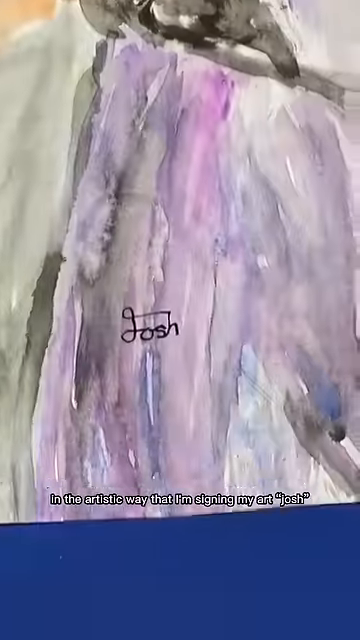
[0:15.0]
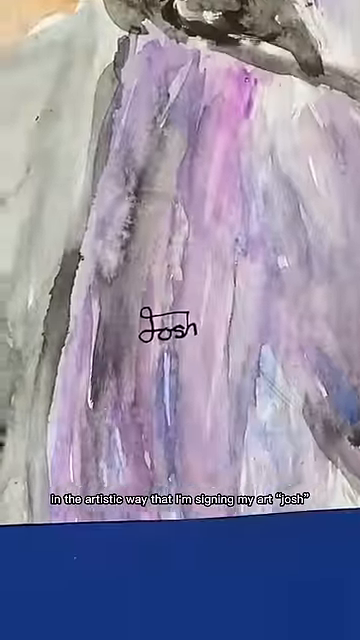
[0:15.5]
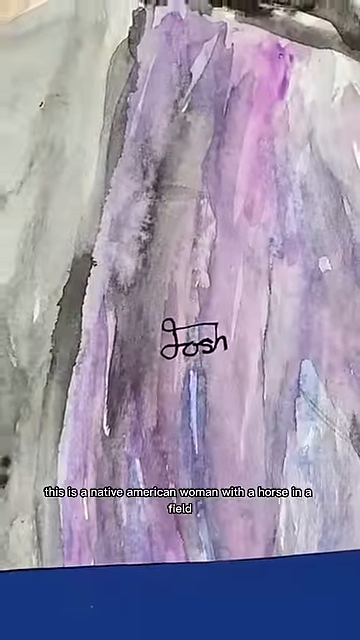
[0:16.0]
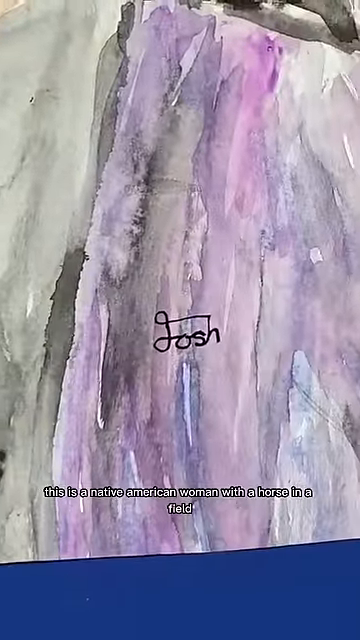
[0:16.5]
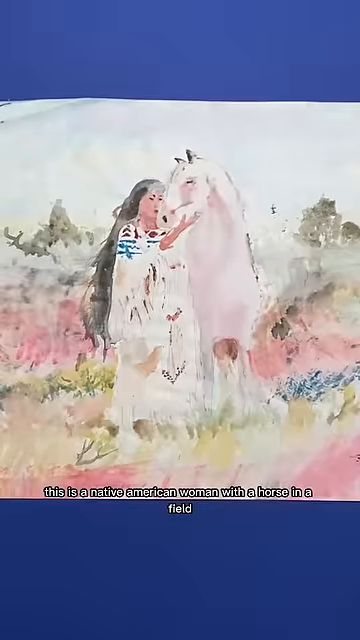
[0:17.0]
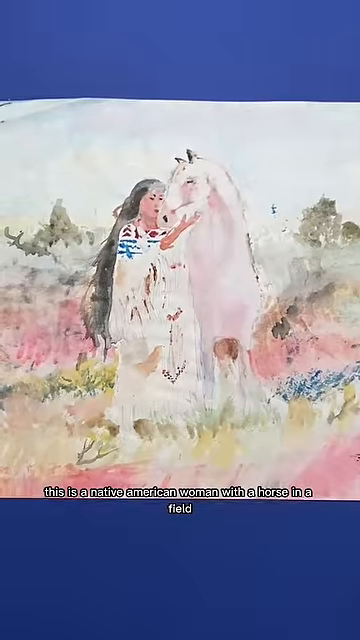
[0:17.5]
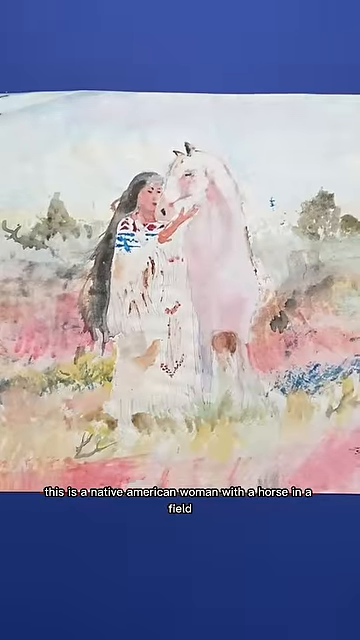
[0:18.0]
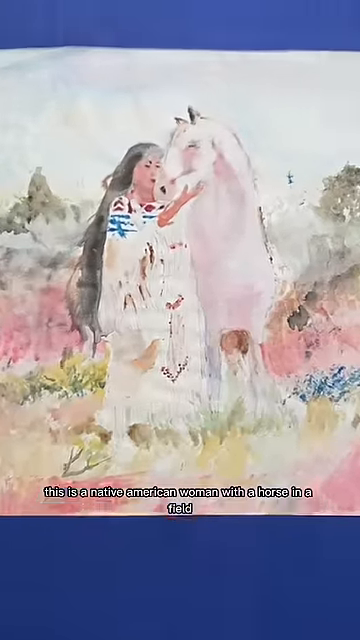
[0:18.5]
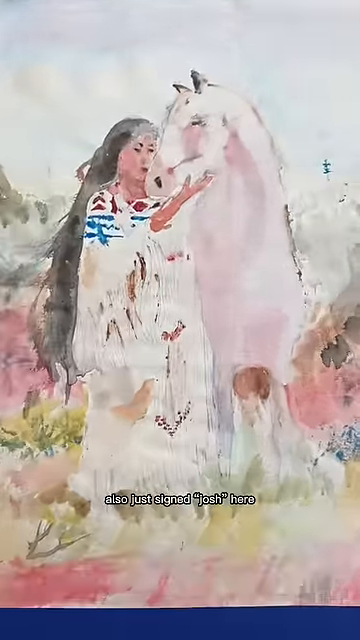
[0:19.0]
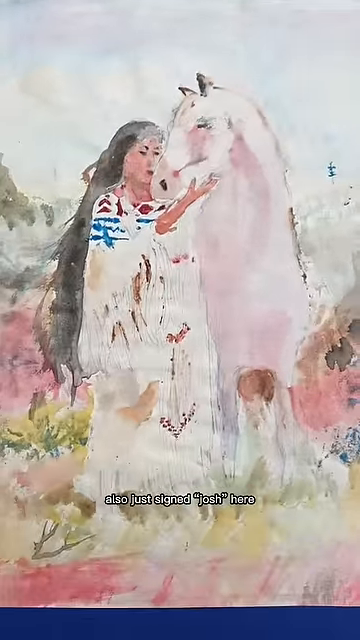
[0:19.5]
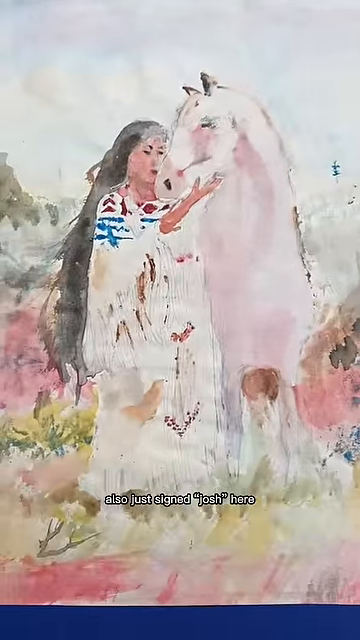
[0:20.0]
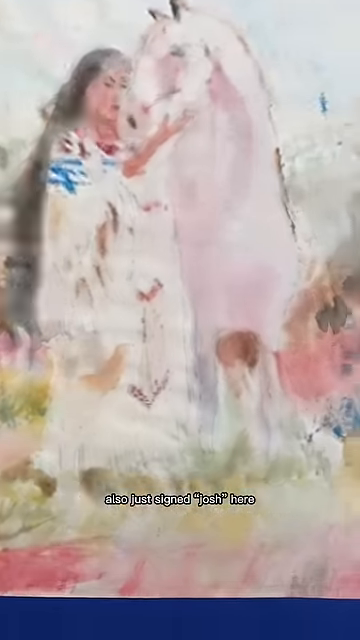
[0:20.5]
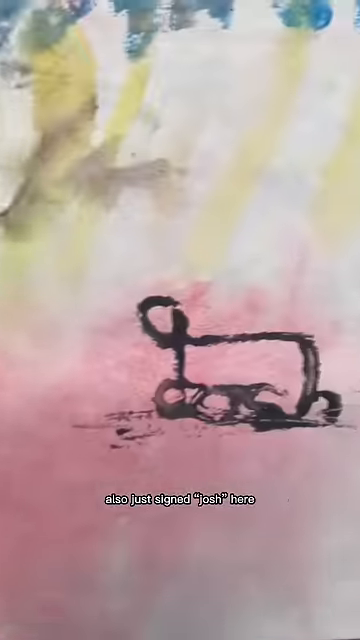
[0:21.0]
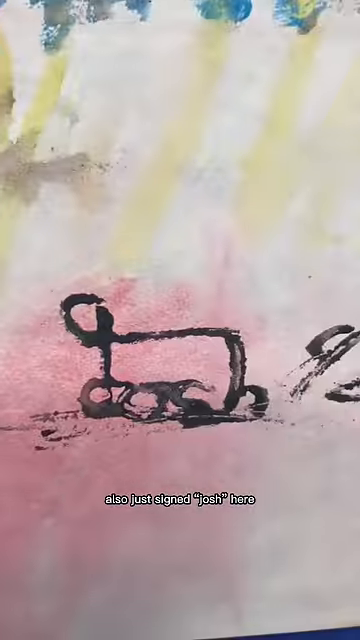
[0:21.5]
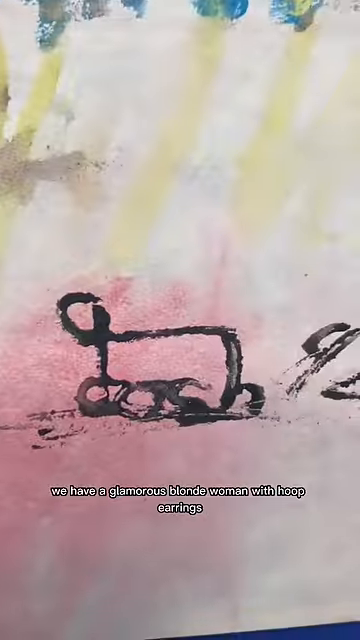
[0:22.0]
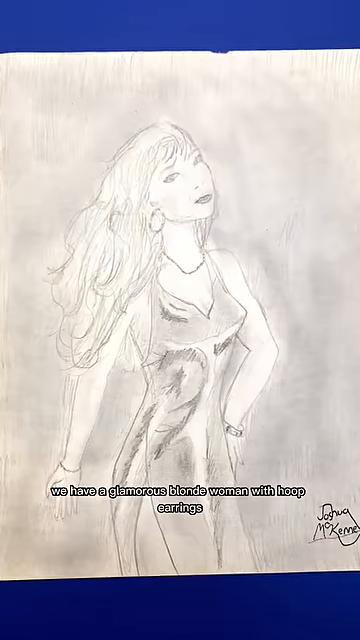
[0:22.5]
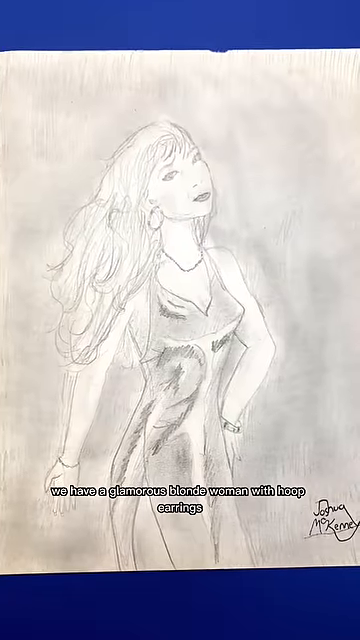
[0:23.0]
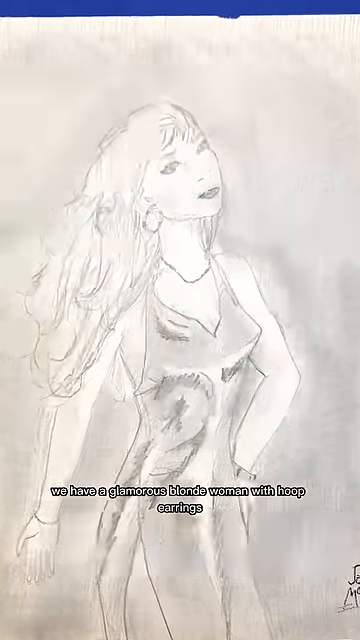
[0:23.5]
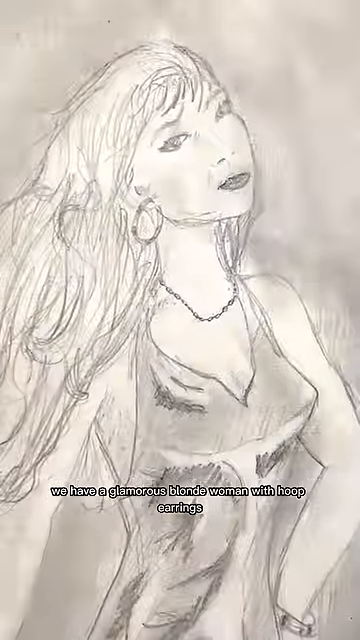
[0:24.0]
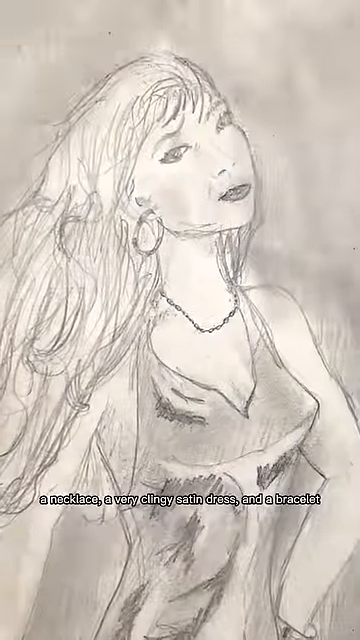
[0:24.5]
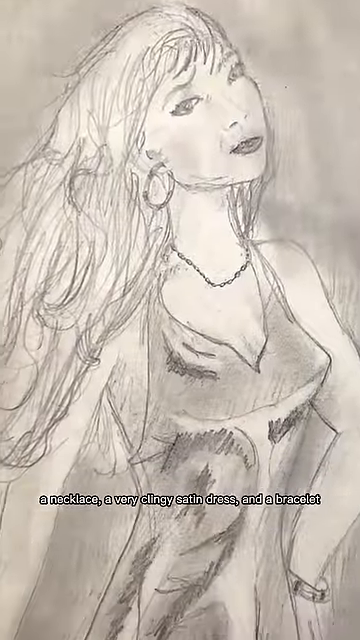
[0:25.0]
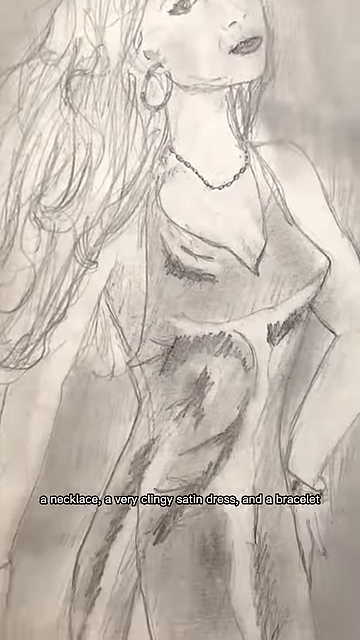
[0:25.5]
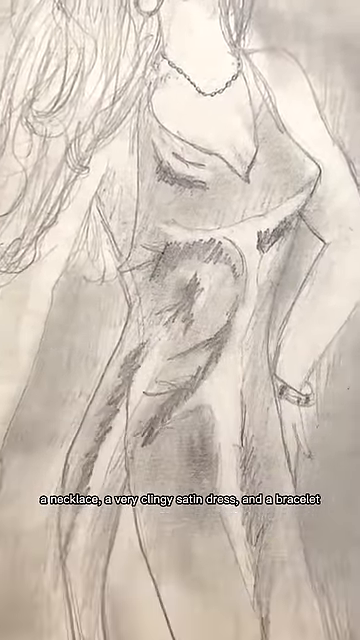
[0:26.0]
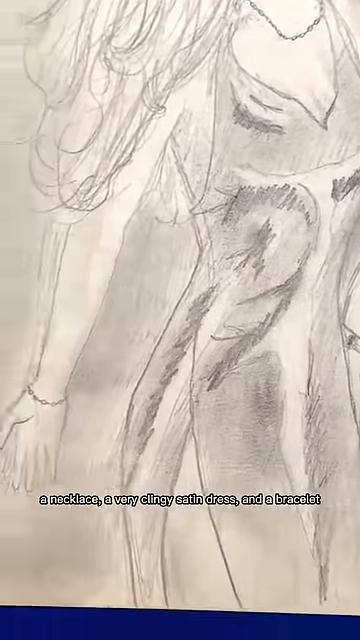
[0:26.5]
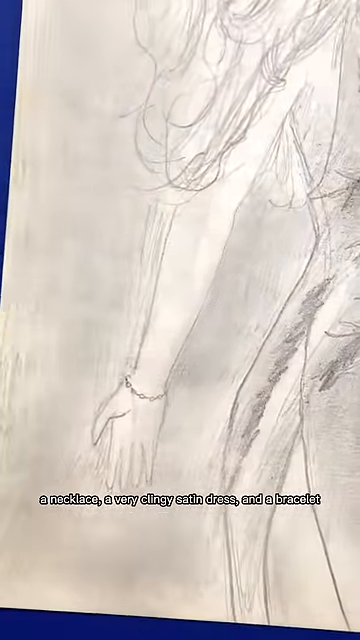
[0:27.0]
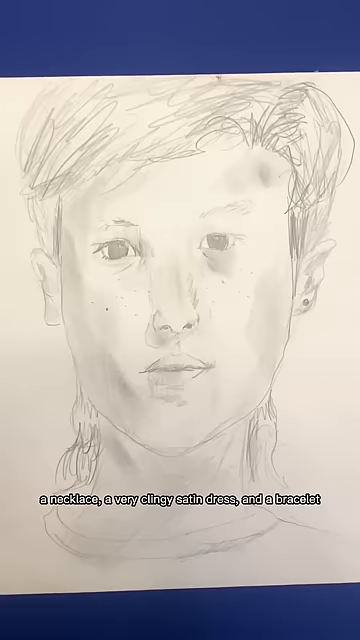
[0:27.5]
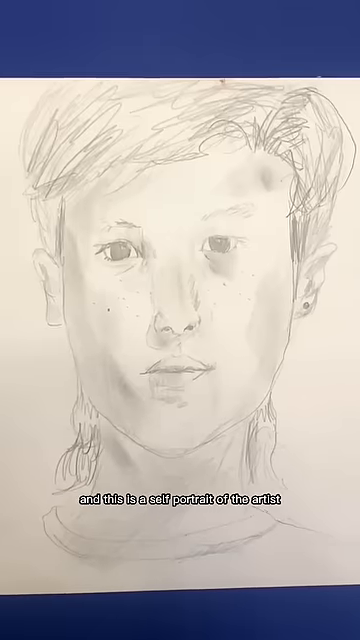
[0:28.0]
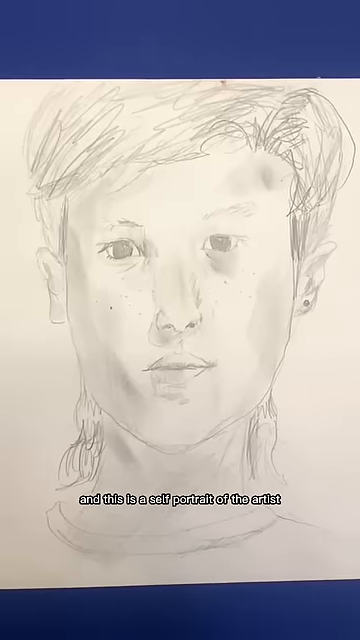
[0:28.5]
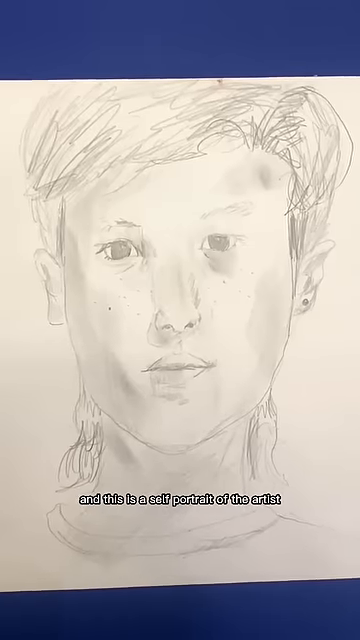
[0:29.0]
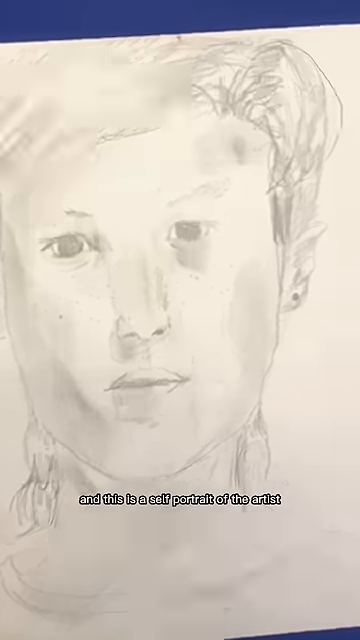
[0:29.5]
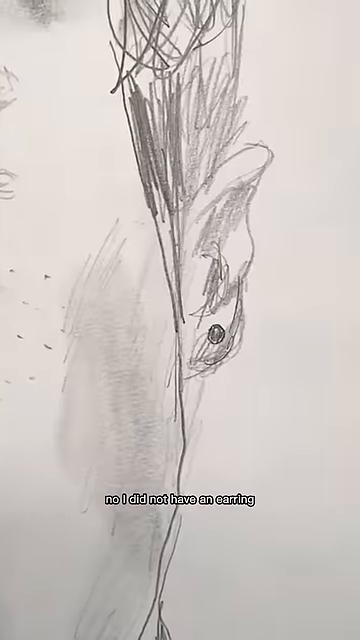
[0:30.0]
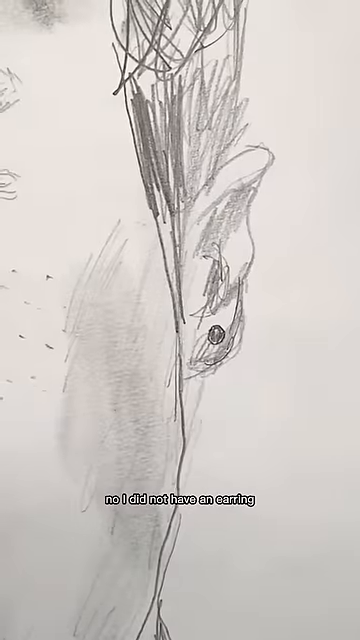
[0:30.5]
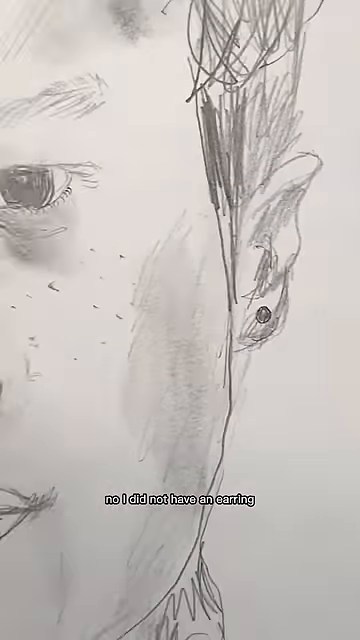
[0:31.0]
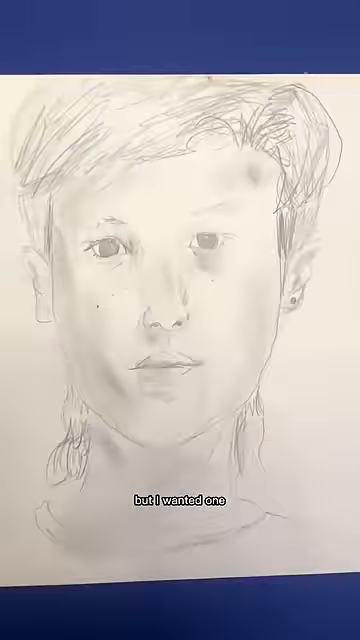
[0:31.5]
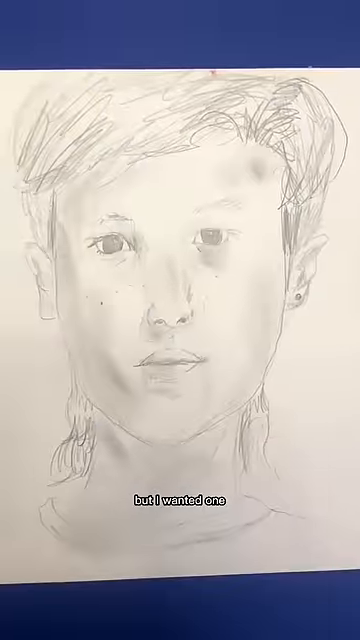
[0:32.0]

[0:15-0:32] The camera zooms in on a painting of what seems to be a Native American woman holding a horse in a field, in very vibrant colors, on a blue background. It is signed "Josh," and he zooms in on the signature. The video cuts to a new pencil drawing with text reading "we have a glamorous blonde woman with hoop earrings"; it shows a woman in a dress with earrings, a necklace and a bracelet, and the text mentions a "very clean satin dress and a bracelet." Another drawing follows, which looks like a young boy, with text reading "and this is a self-portrait of the artist." It is a pencil drawing on white paper, not very detailed and fairly amateurish, presumably from early in his art. He zooms in on the ear, where the drawing has a little stud earring, with the words "No, I do not have an earring," followed by text reading "But I wanted one." All the paintings and drawings are signed "Josh," and some include his last name, "McKenney." They all look amateurish and rest on a blue background, presumably a blue table or blue cloth.